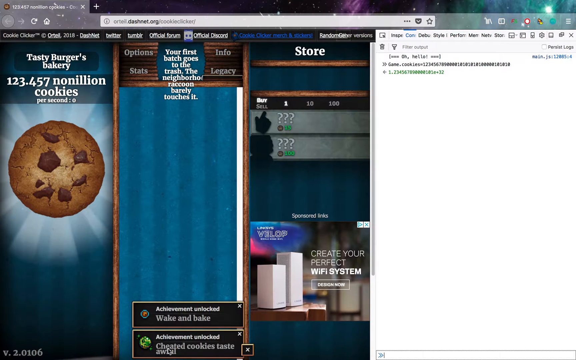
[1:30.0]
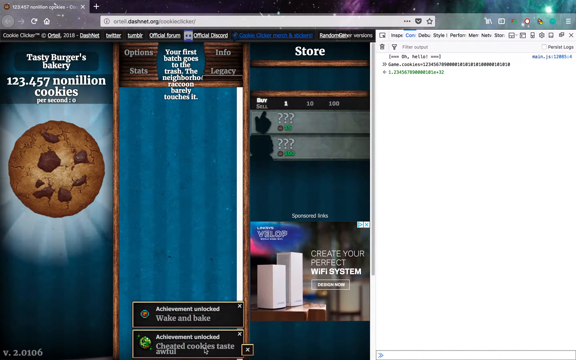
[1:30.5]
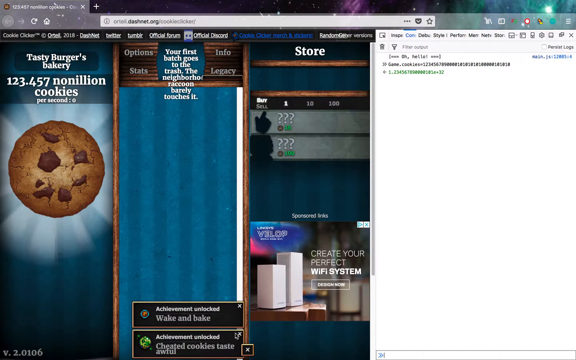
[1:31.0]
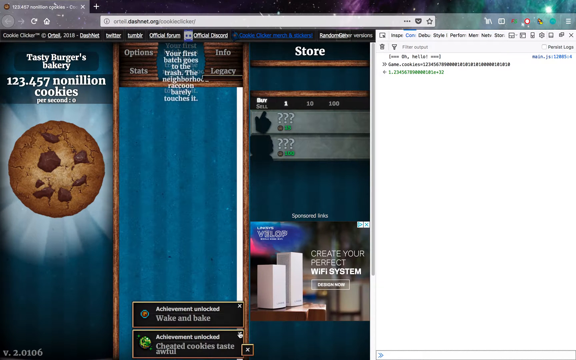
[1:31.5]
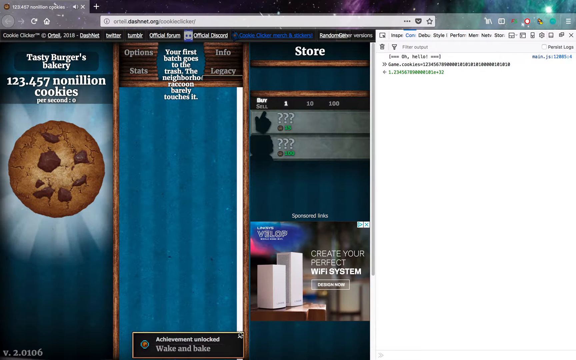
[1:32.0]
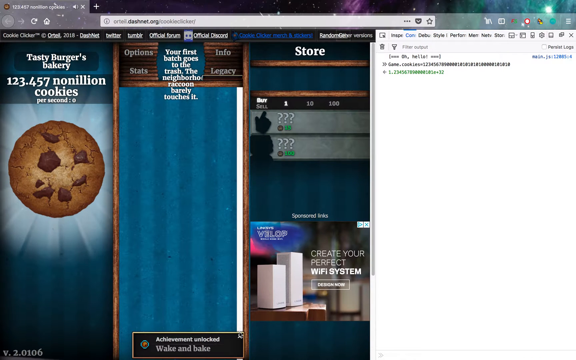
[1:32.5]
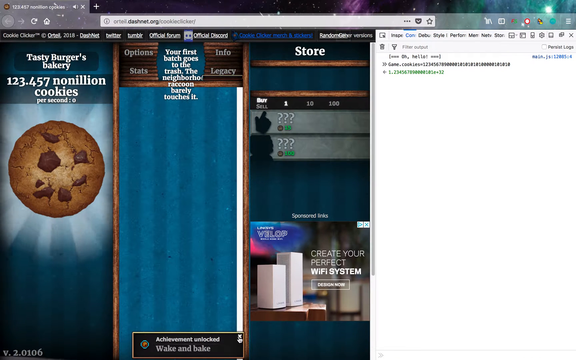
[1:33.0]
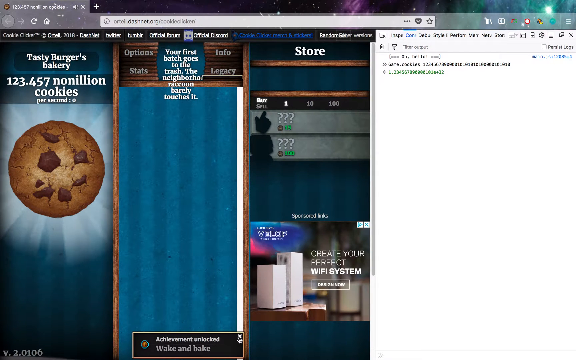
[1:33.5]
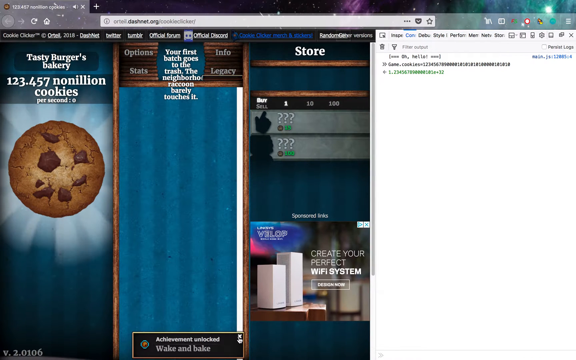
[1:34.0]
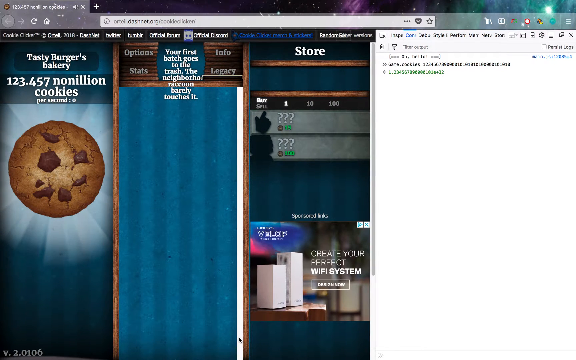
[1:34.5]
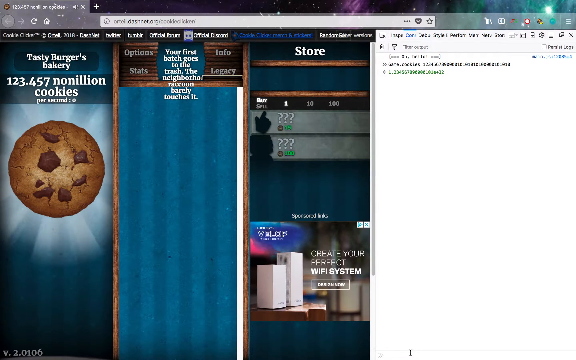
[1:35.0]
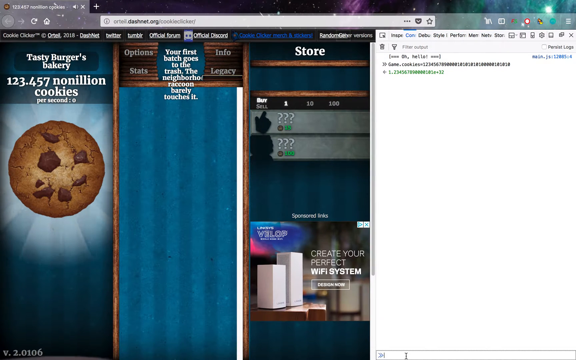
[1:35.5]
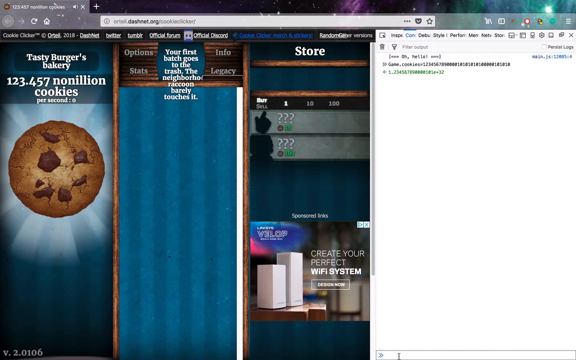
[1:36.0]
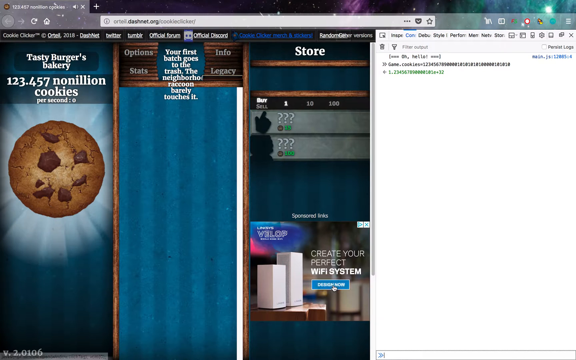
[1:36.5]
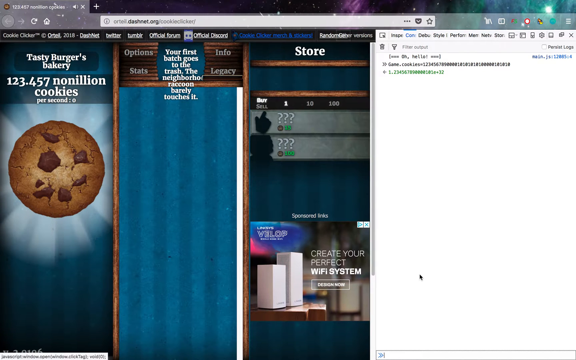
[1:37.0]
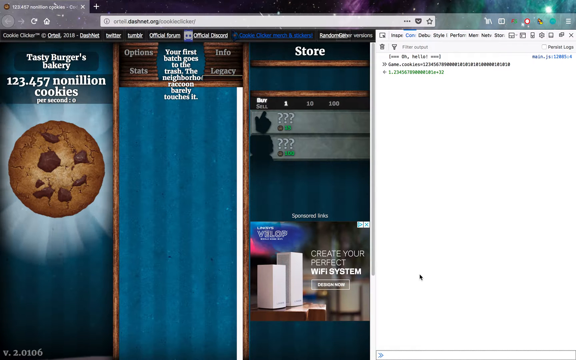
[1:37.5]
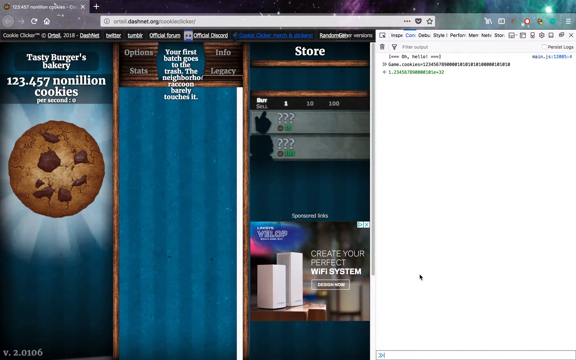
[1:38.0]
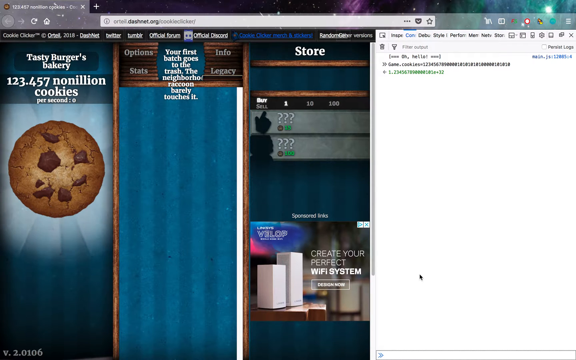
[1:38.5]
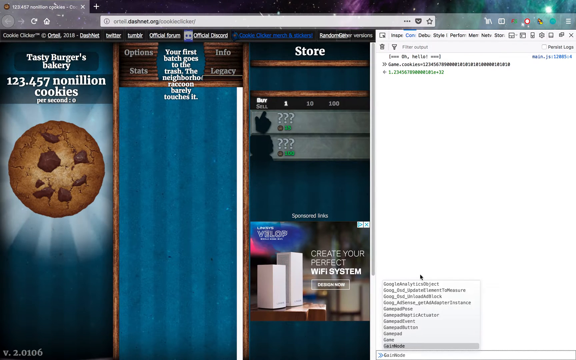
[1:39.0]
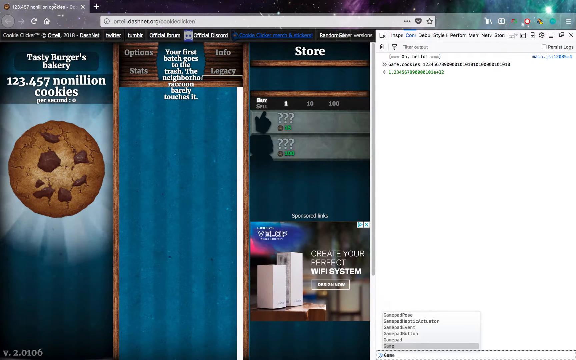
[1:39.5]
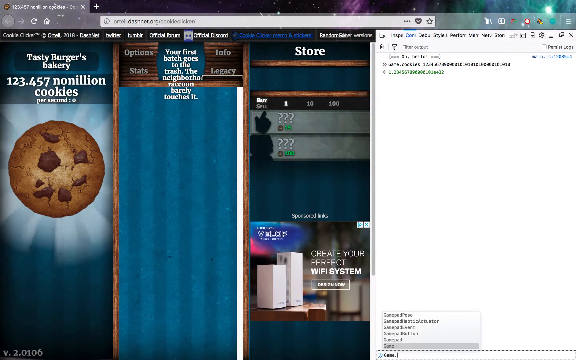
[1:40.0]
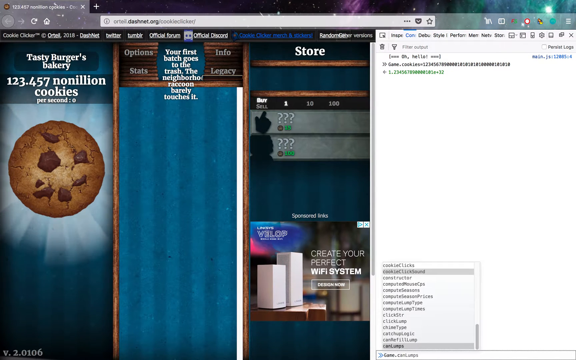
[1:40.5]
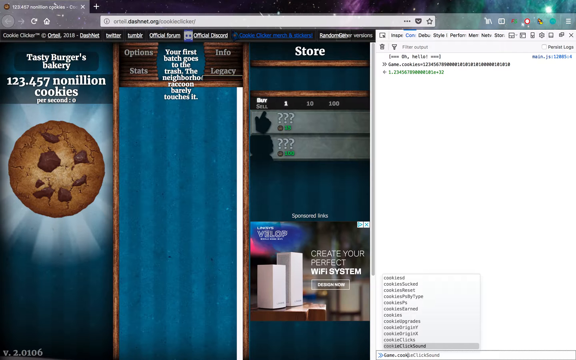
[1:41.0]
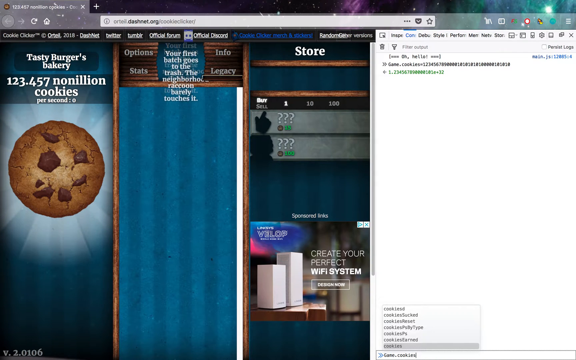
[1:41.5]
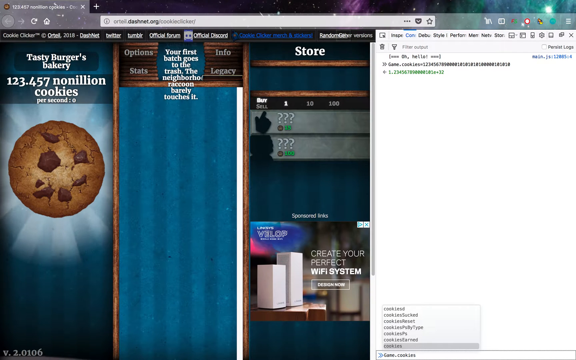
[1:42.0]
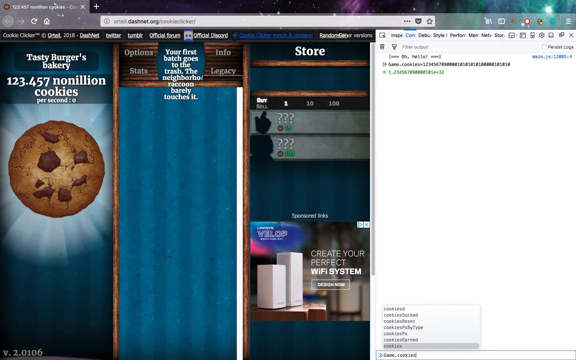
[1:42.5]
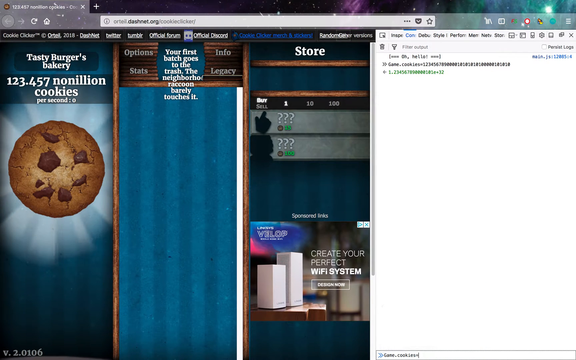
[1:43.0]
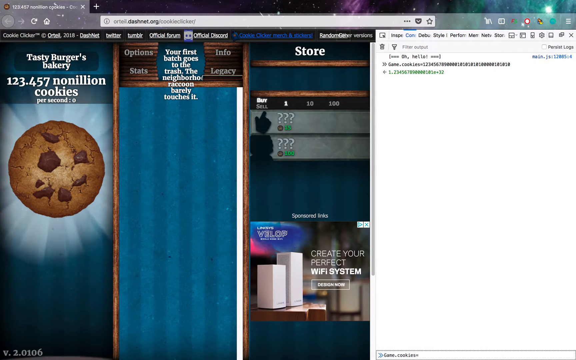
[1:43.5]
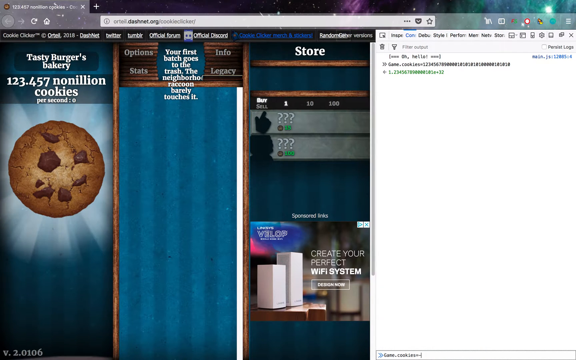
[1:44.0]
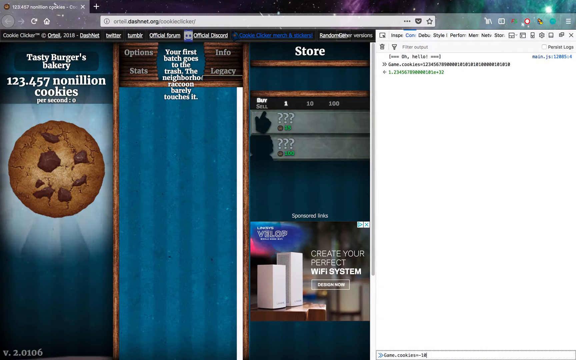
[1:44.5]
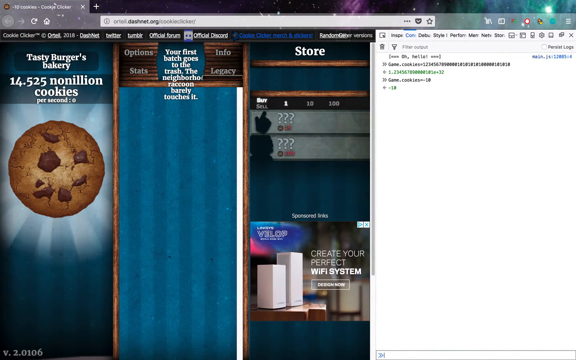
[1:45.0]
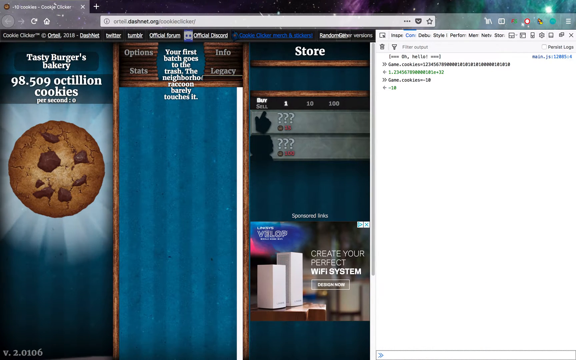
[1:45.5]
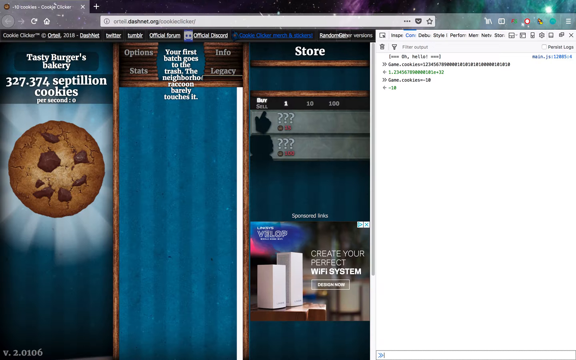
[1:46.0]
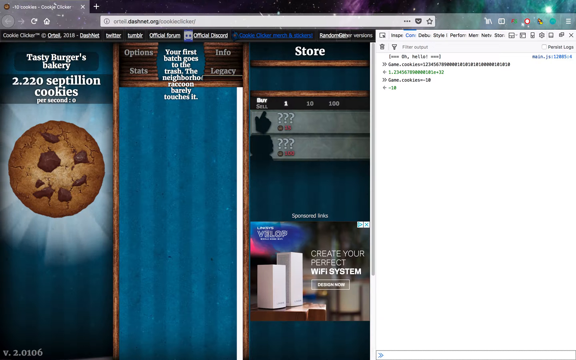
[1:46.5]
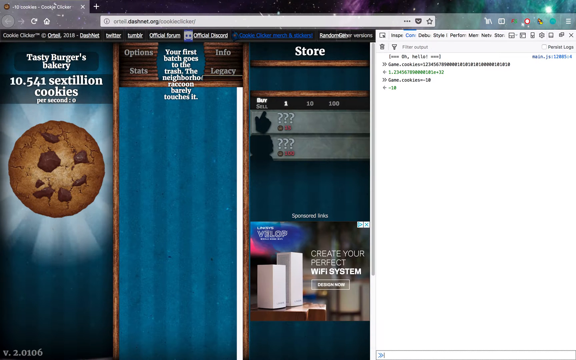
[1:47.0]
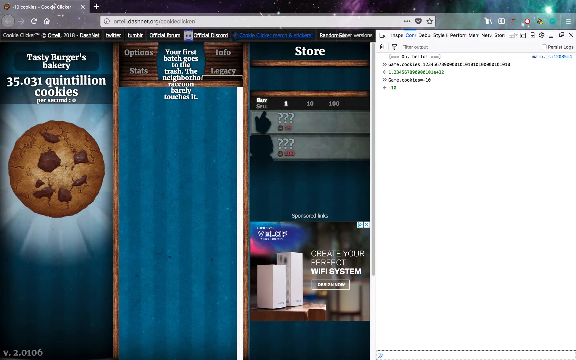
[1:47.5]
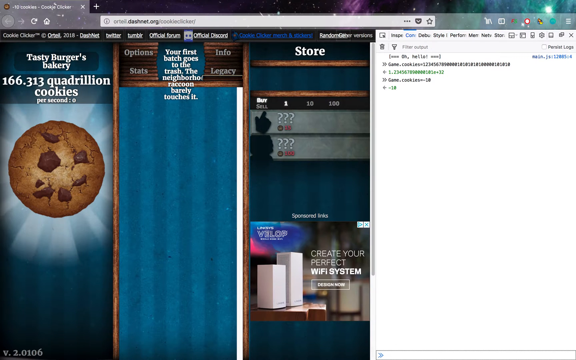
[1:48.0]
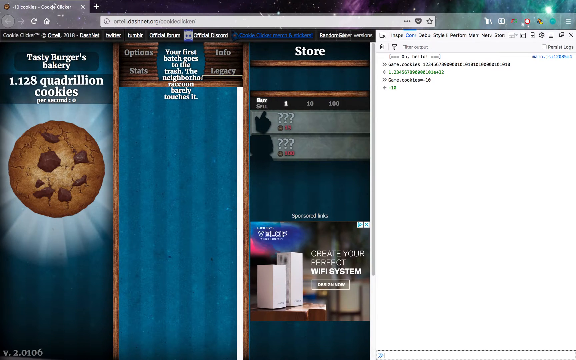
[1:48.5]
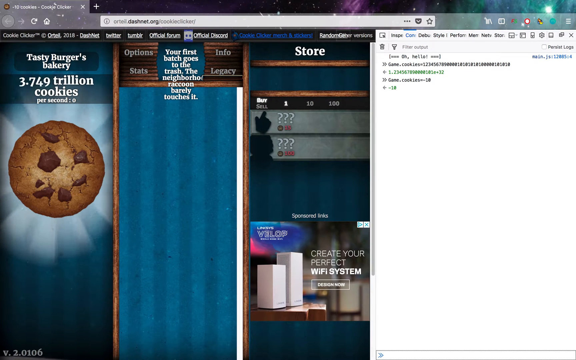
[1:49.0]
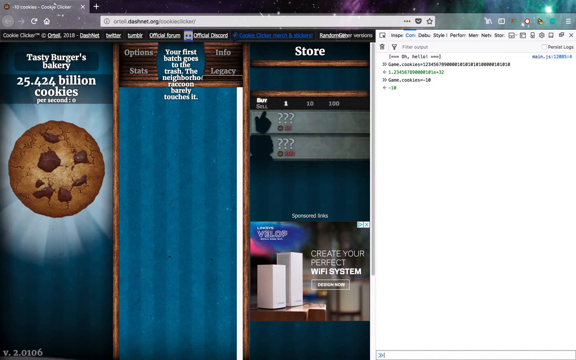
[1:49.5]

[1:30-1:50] He continues typing in the inspect element code search. After giving himself many cookies, he goes back to the inspect element search and types more. Nothing appears there, but he gives himself many more cookies from the game, and he also seems to take cookies away from himself. The URL is dashnet.org/cookie clicker.